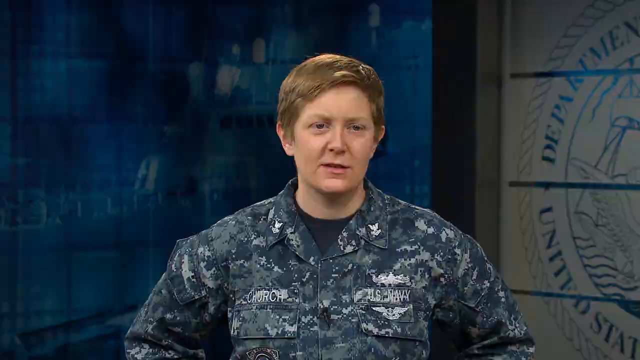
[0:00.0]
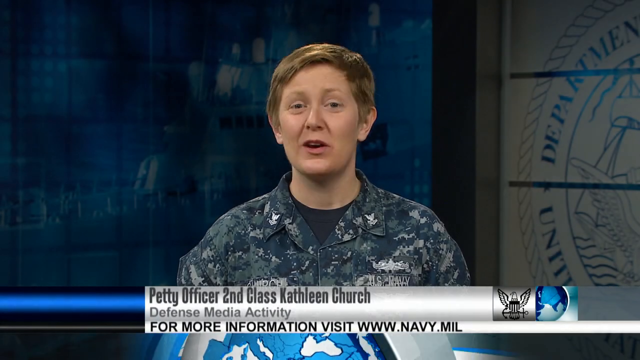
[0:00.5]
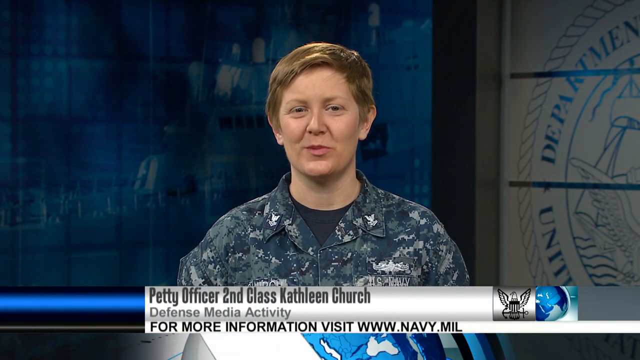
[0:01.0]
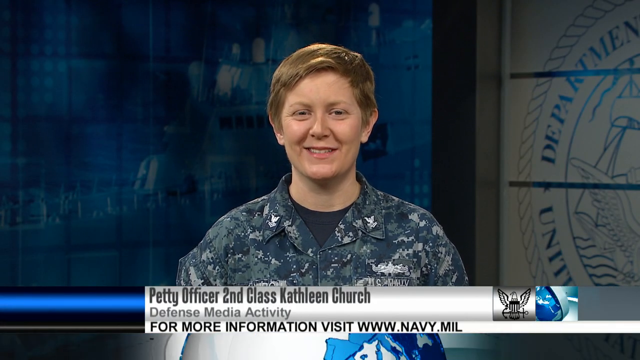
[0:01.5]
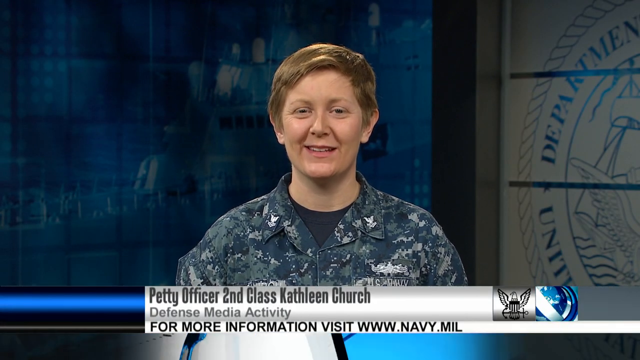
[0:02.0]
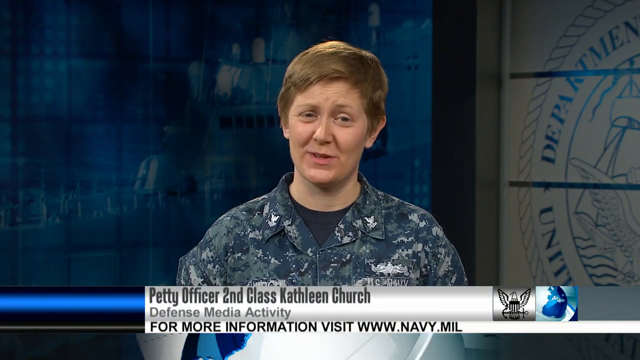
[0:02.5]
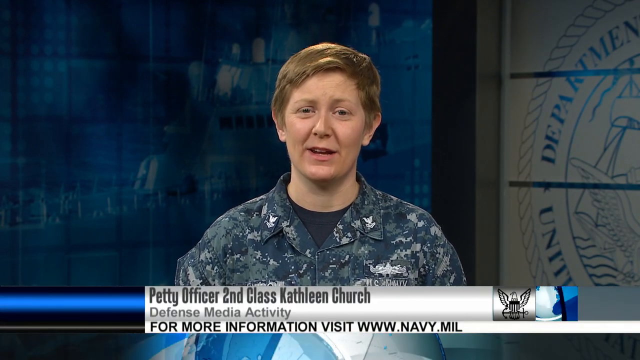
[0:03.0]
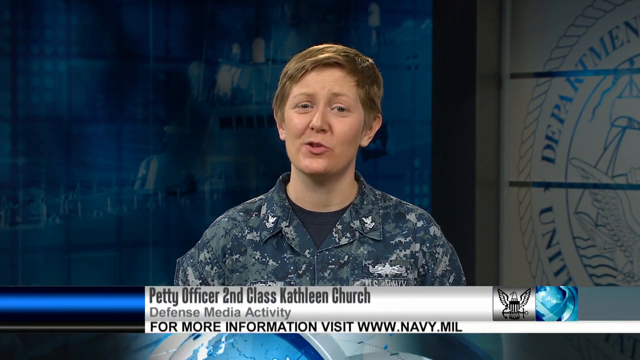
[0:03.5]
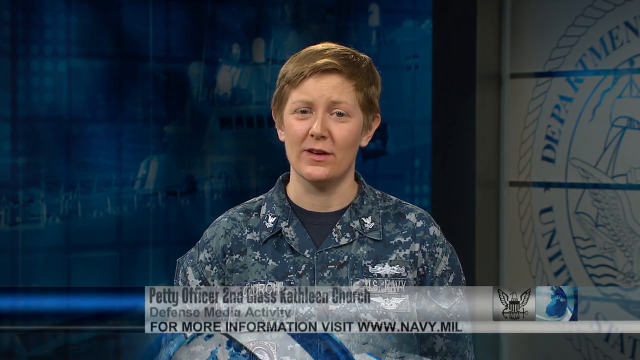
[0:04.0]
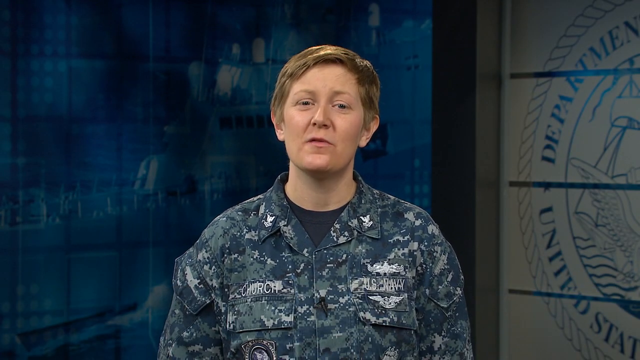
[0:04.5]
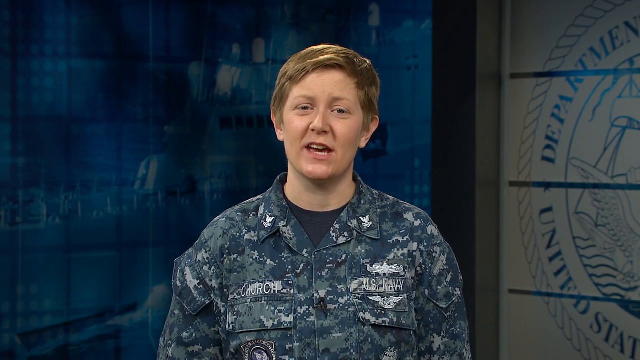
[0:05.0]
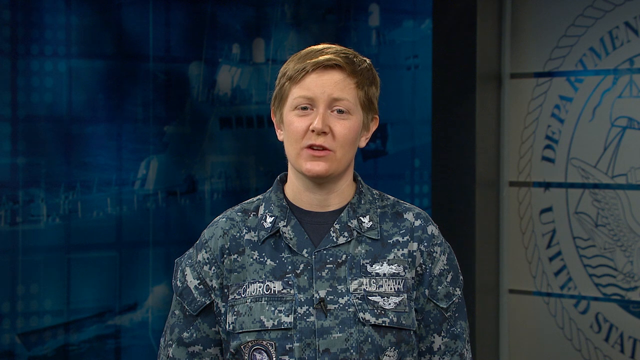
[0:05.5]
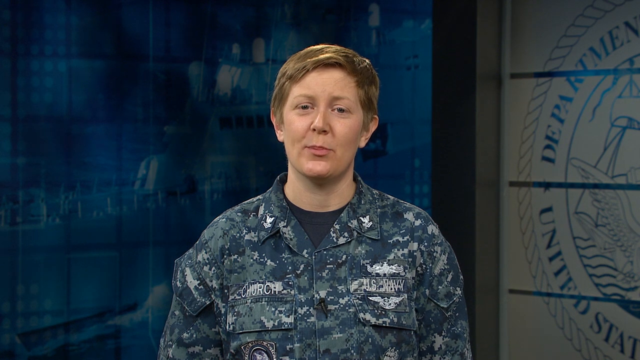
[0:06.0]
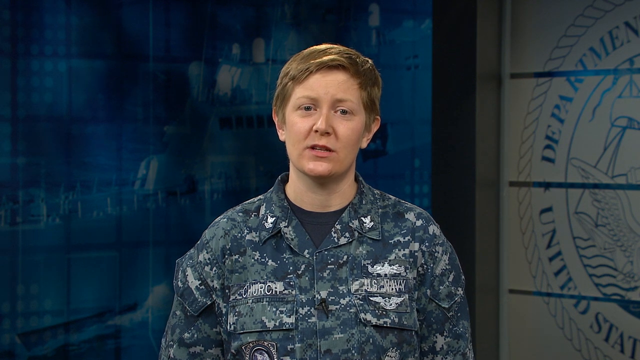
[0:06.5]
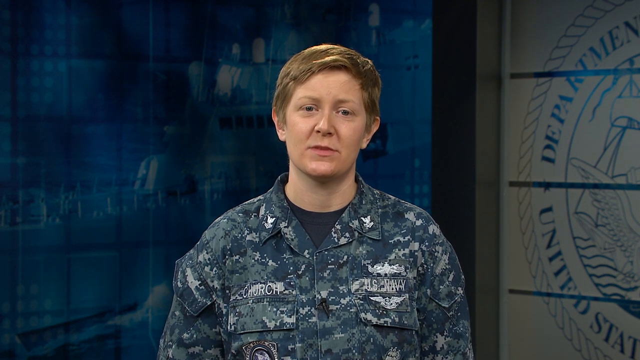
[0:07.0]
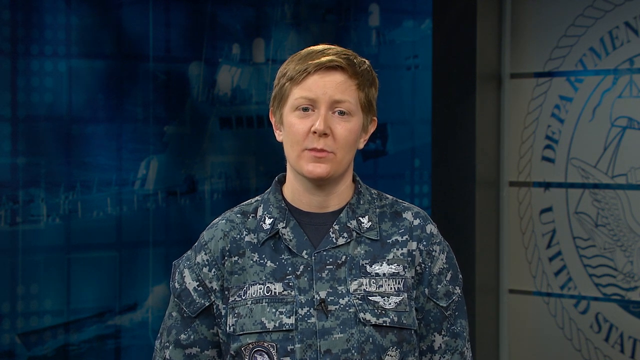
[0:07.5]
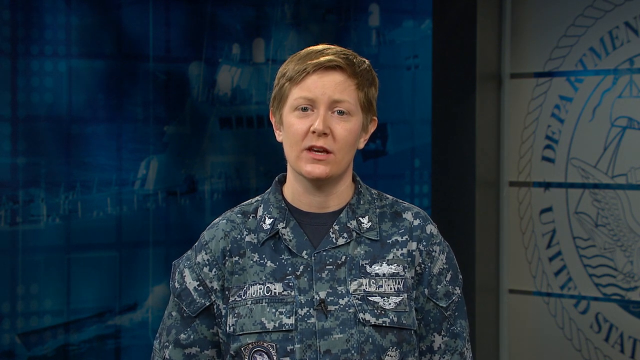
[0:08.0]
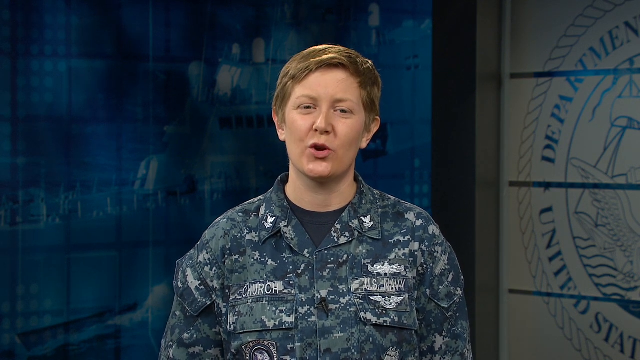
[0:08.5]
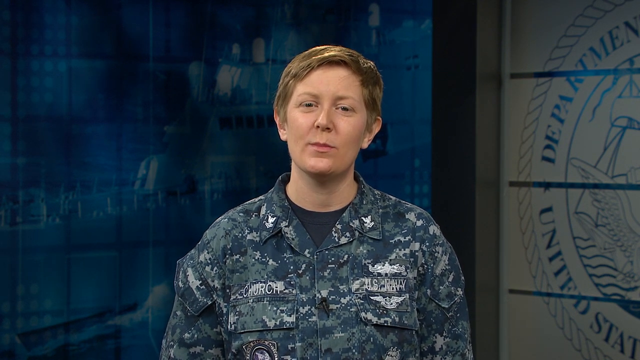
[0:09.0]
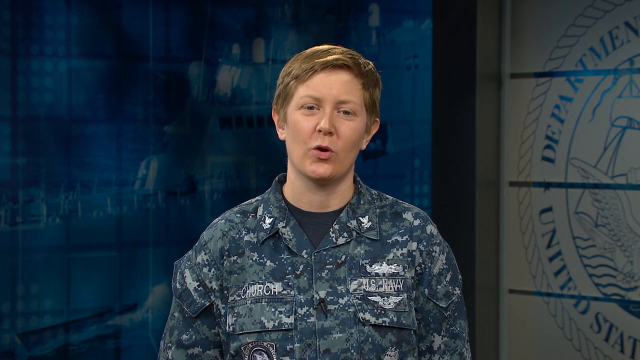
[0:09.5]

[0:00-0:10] A female soldier talks to the camera. She wears a blue camouflage long-sleeve shirt over a blue t-shirt. On her chest is a patch that says "US Army" and another with her name below it. An overlay identifies her as "Petty Officer 2nd Class Kathleen Church"; below that it says "Defense Media Activity", and below that "for more information visit www.navy.mil". She has metal pins that look like eagles on her collar, and her shirt has multiple pockets, one on each shoulder and one on each breast.